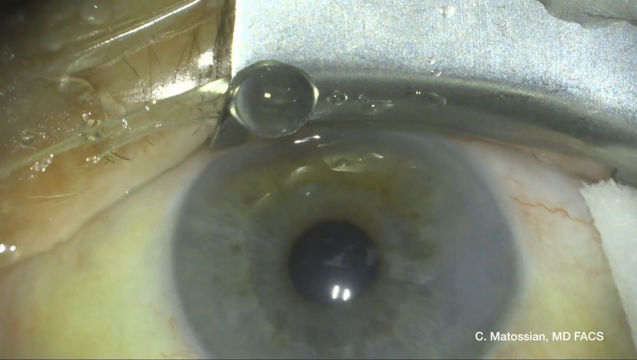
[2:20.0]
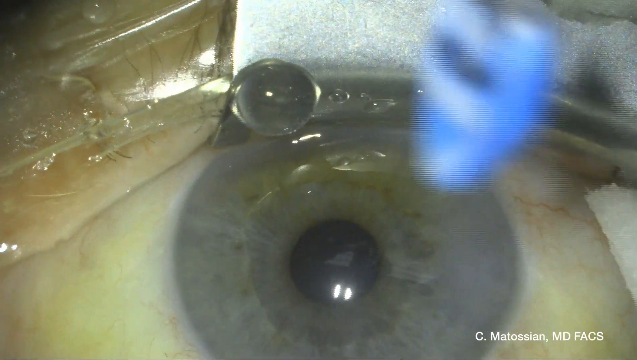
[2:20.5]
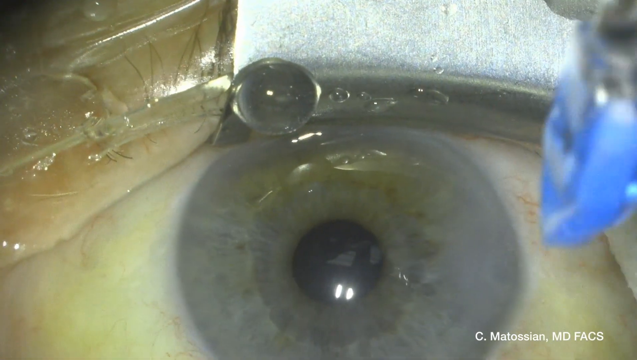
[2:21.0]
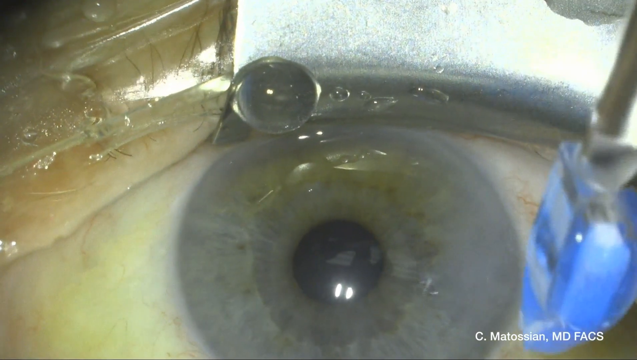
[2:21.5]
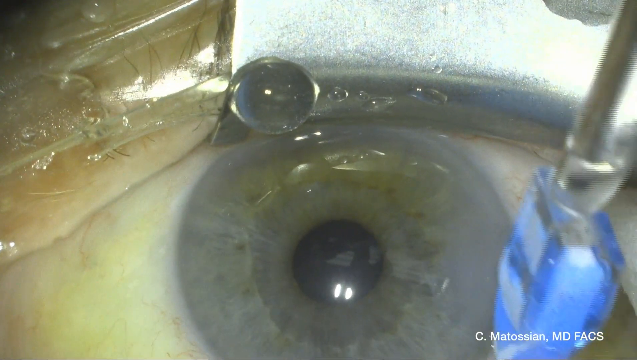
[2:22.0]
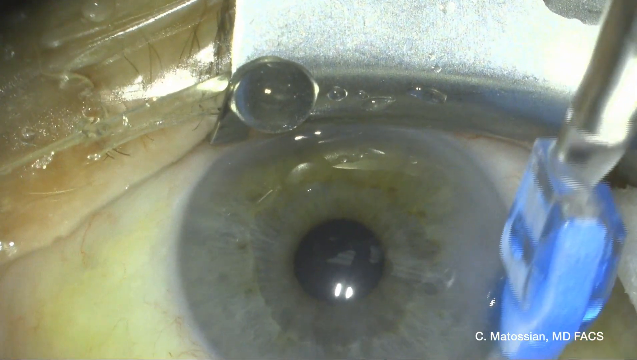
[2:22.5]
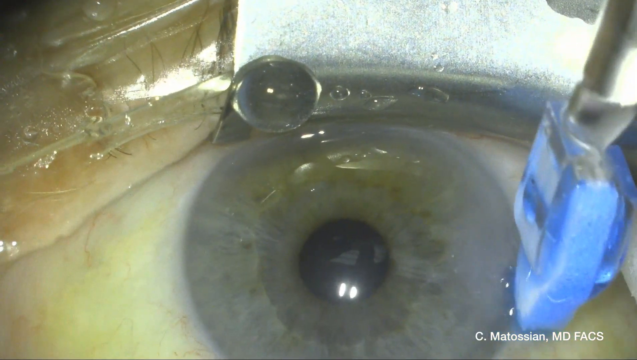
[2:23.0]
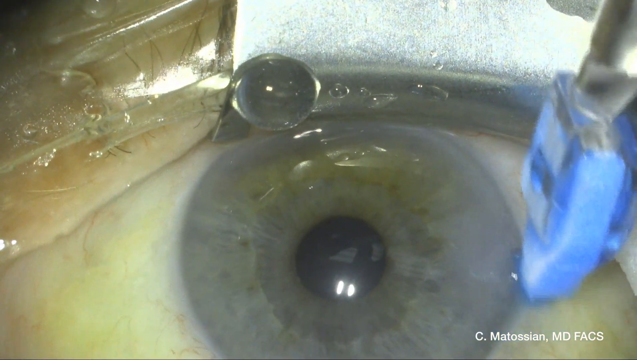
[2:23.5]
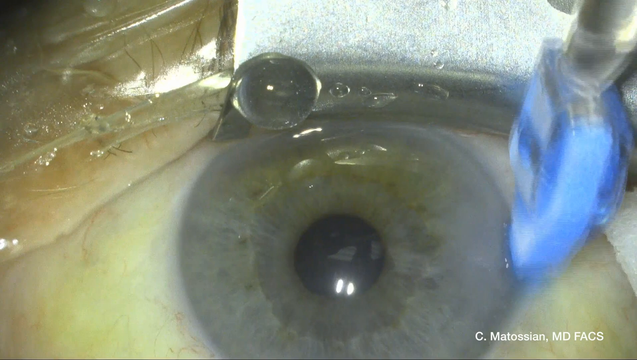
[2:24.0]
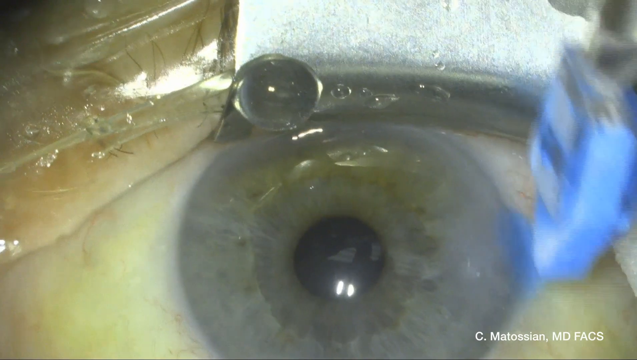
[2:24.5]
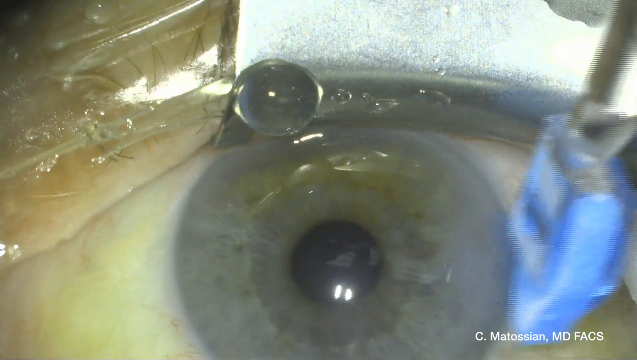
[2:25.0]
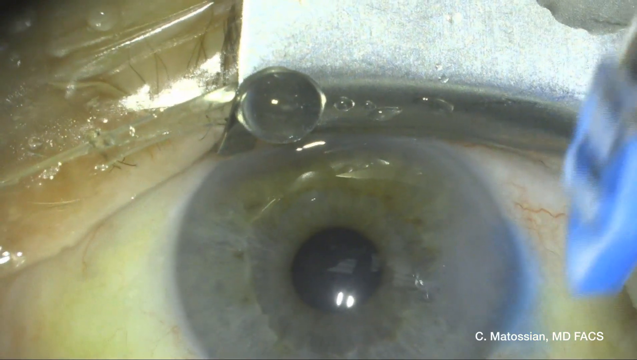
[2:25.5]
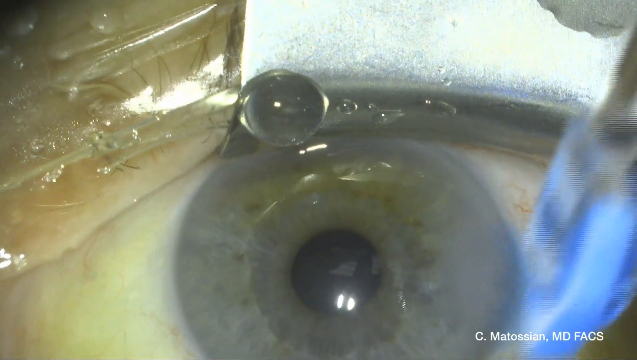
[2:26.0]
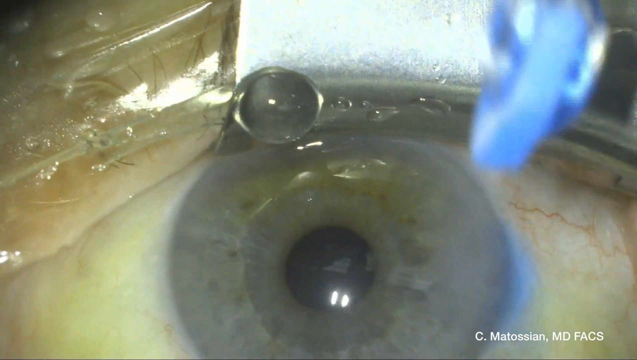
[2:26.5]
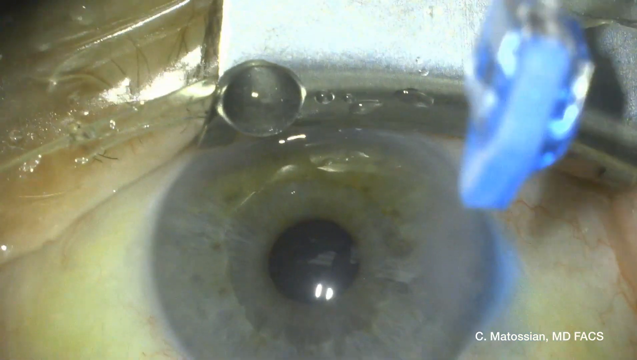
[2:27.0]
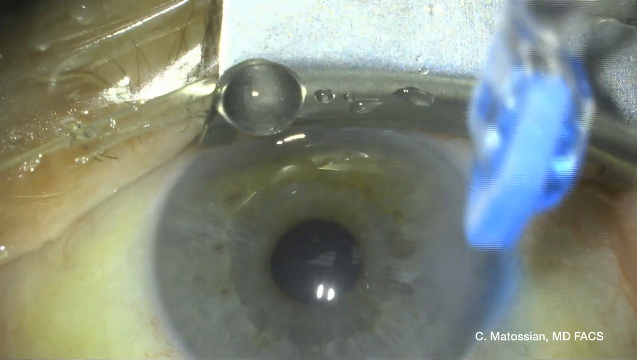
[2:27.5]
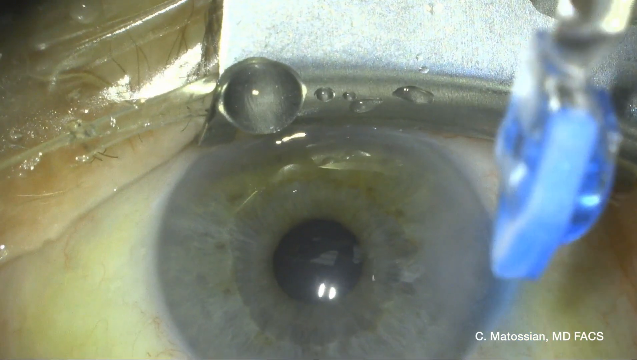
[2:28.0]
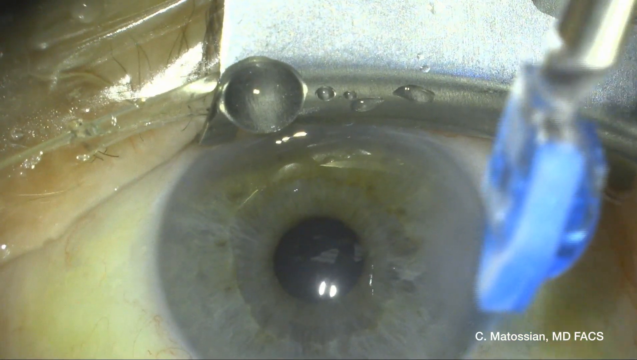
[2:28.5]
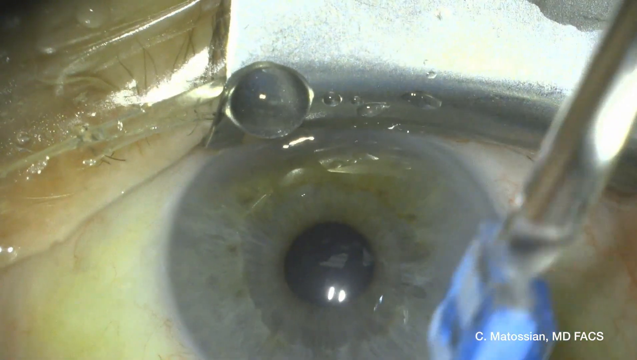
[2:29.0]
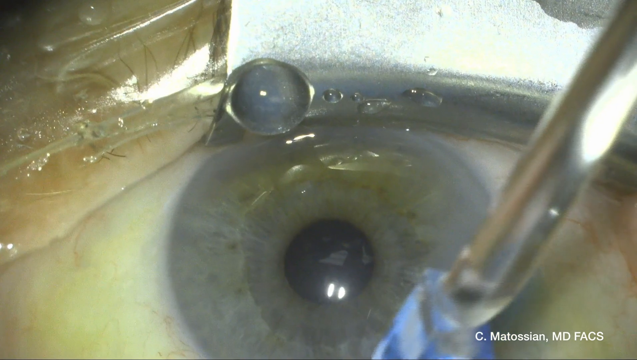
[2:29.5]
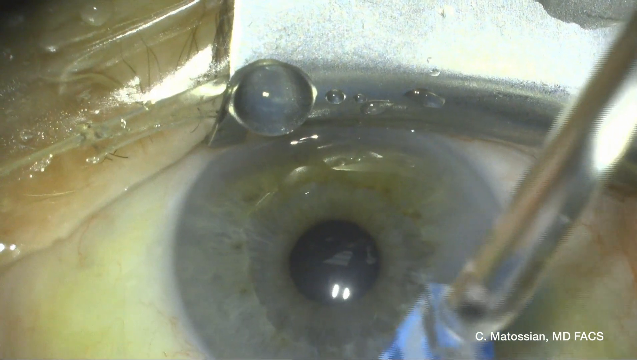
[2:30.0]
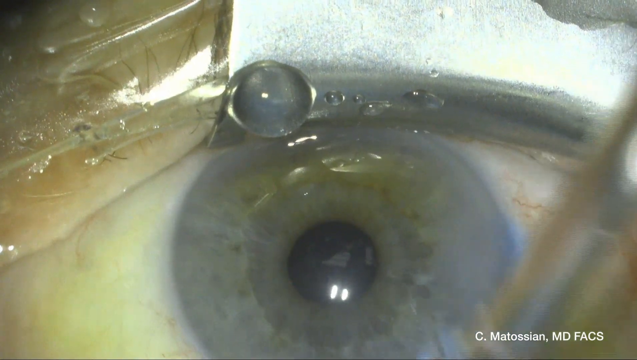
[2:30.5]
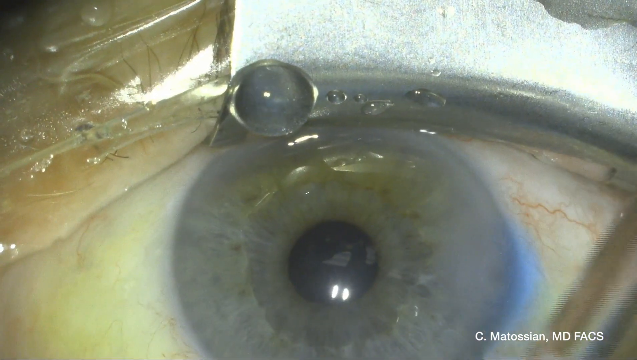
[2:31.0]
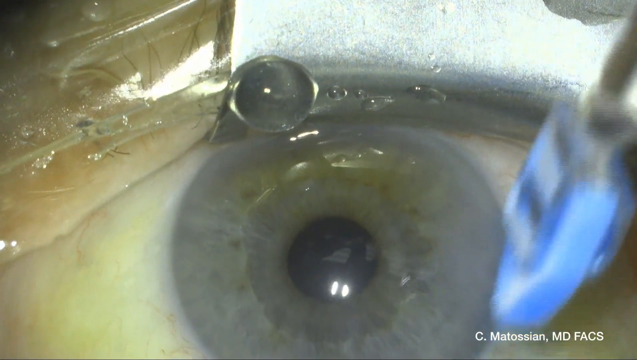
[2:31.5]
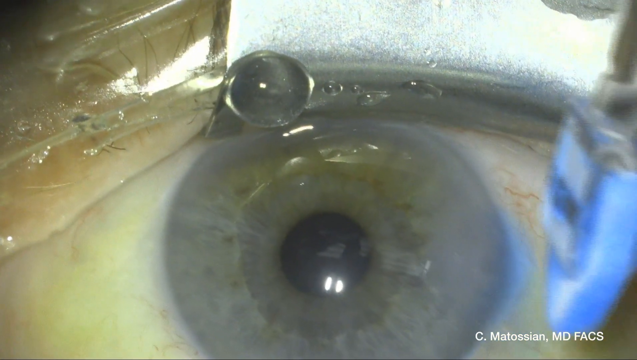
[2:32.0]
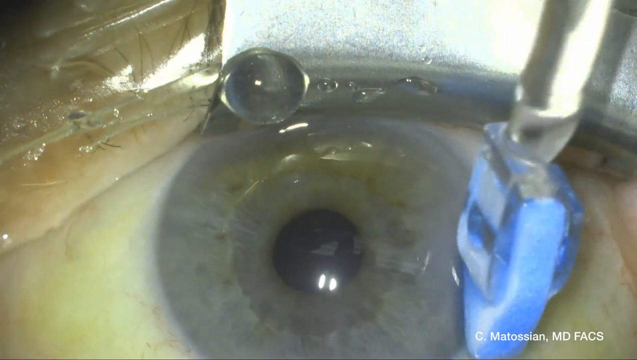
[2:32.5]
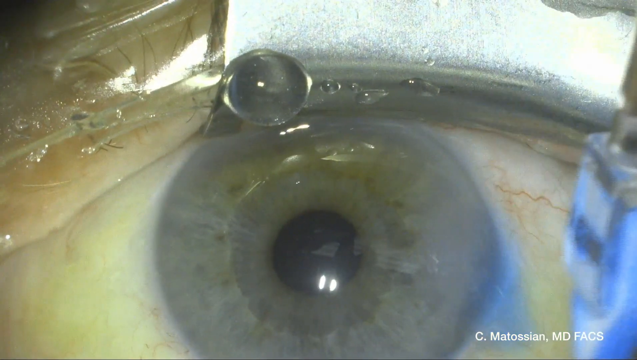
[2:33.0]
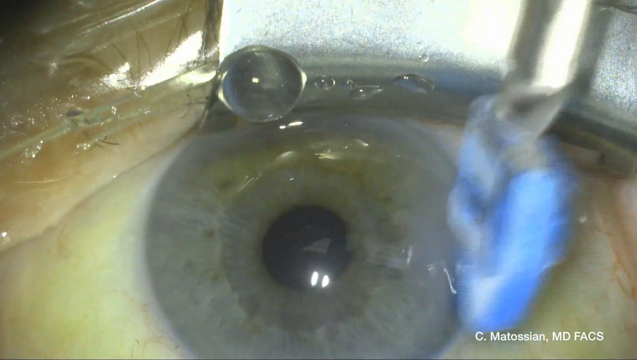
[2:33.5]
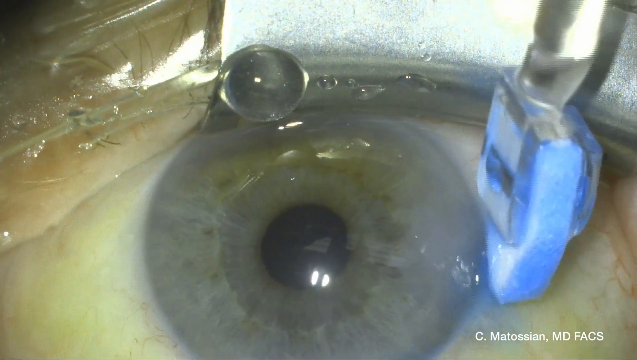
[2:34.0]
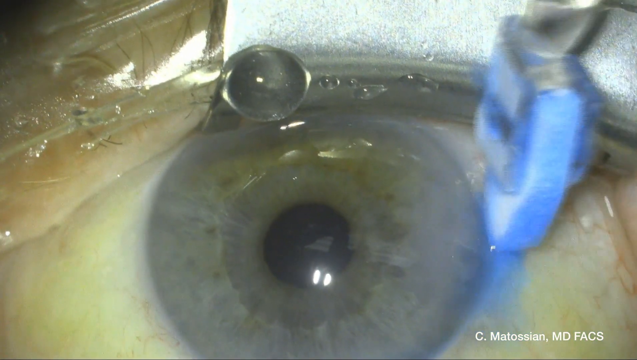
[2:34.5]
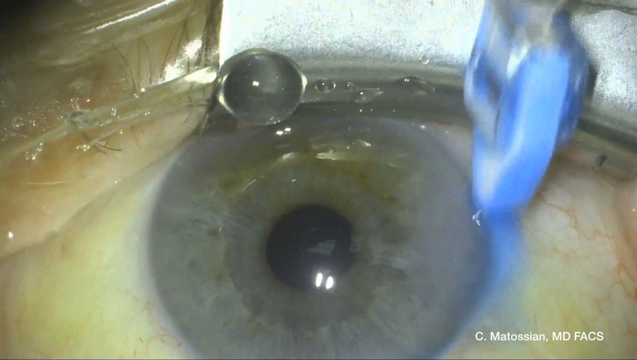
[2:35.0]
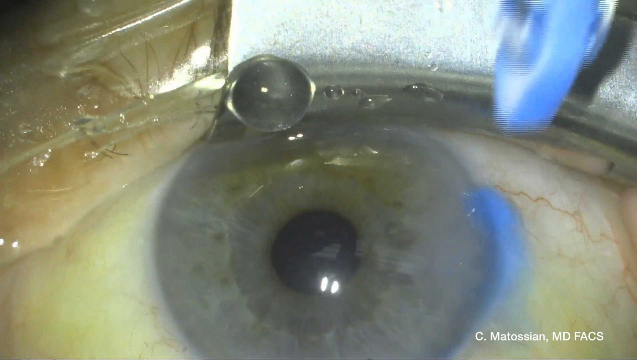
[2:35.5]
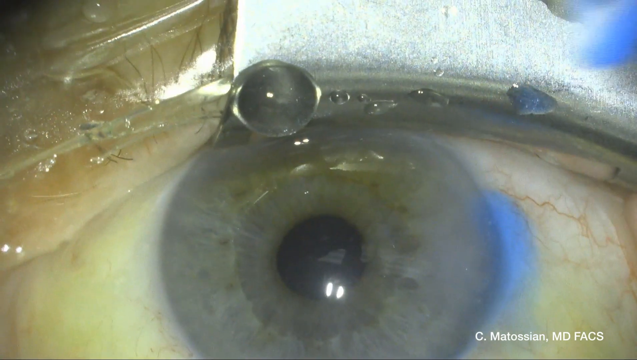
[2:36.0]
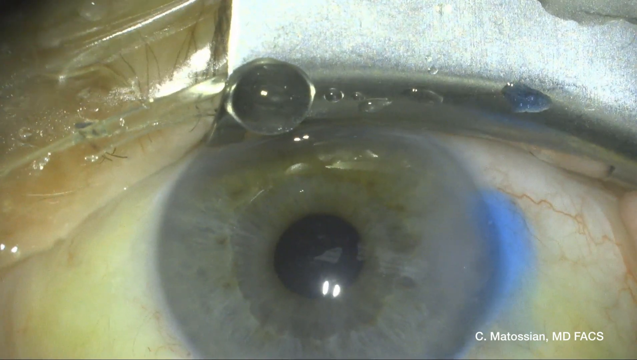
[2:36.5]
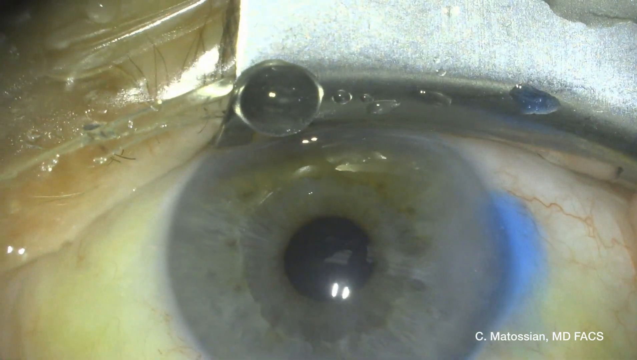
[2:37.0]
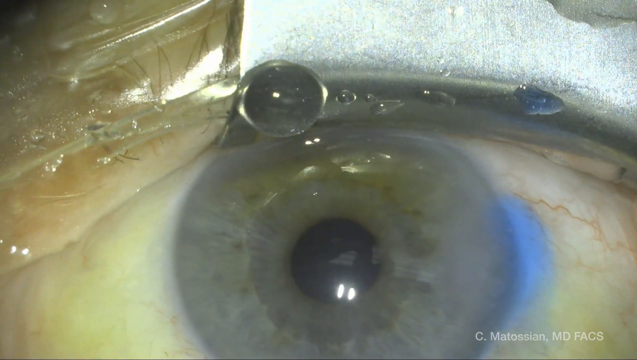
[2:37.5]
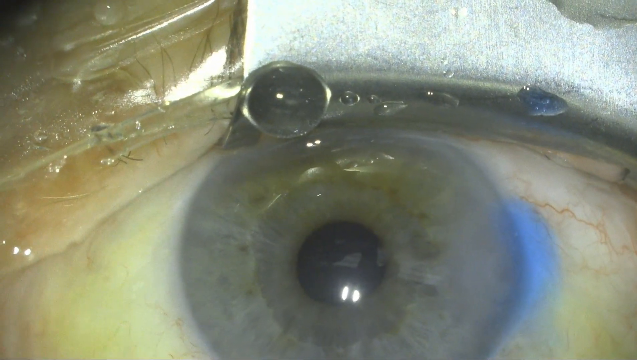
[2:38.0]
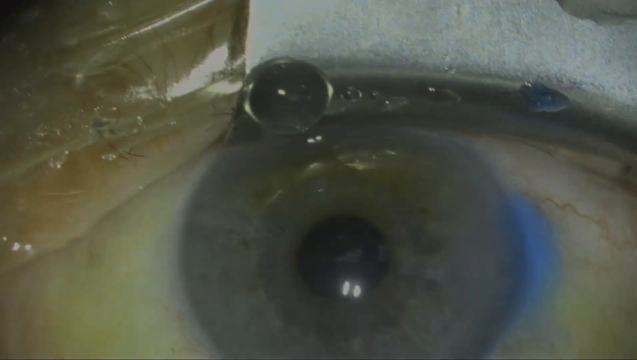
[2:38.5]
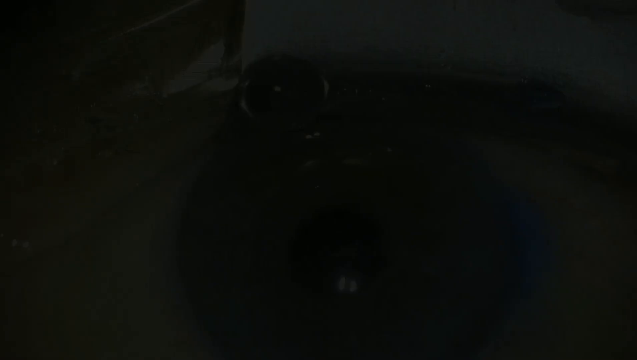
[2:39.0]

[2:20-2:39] An operation on an eye shows the white sclera with red veins running through it, the blue iris and the black pupil. On the right side of the eye, in the upper right corner of the frame, a metallic piece holds up the eyelid. On the left side is the eyelid with little eyelashes visible. On the right side, a white object is pressed to the eye under the metallic piece. A blue object is dropped from the upper right corner over the eye. The blue object is pressed onto the eye and spreads a blue liquid at the insertion point on the right side of the iris. It is raised up, brought down in a clockwise curved motion, brought back up and spread around. The blue gel is spread on the right side of the iris, and the video fades out to black.